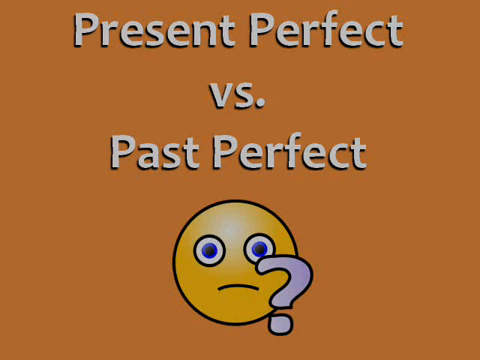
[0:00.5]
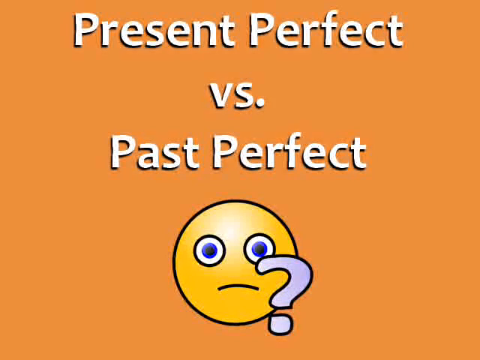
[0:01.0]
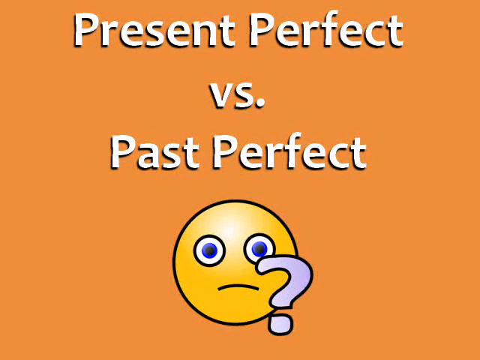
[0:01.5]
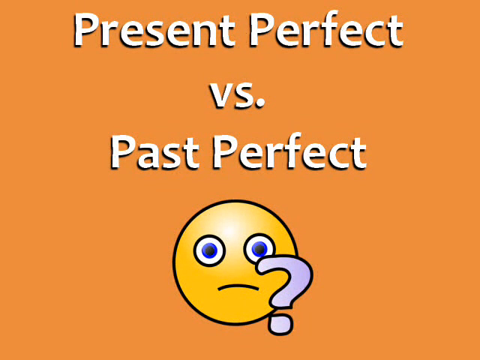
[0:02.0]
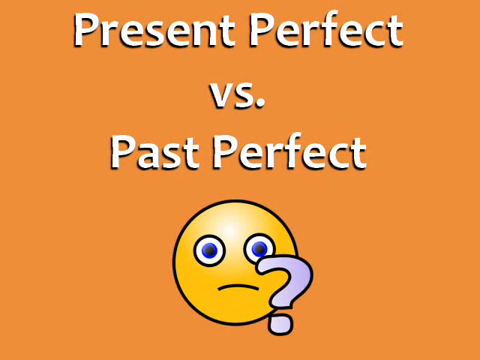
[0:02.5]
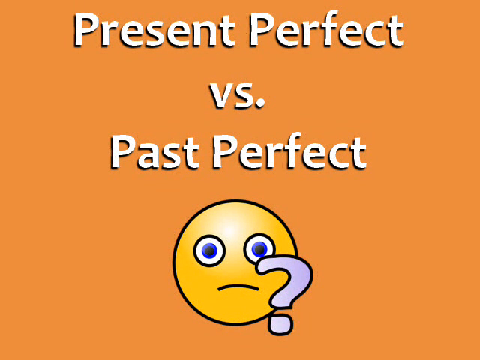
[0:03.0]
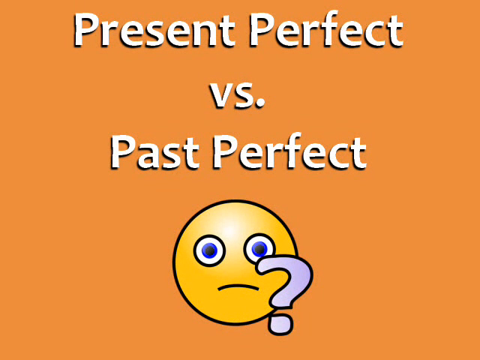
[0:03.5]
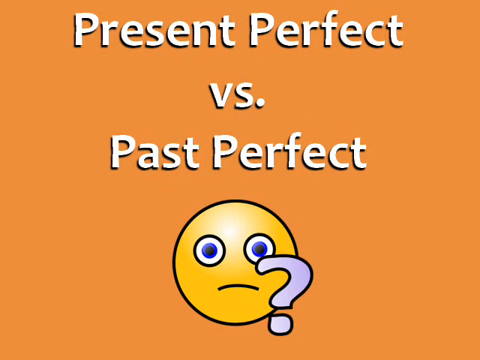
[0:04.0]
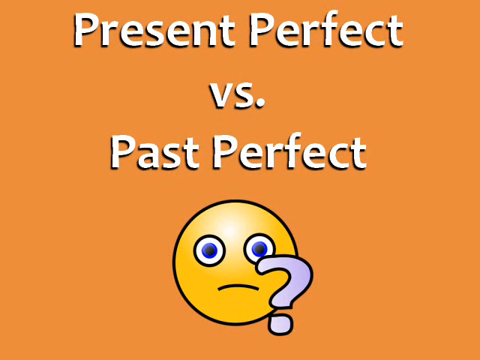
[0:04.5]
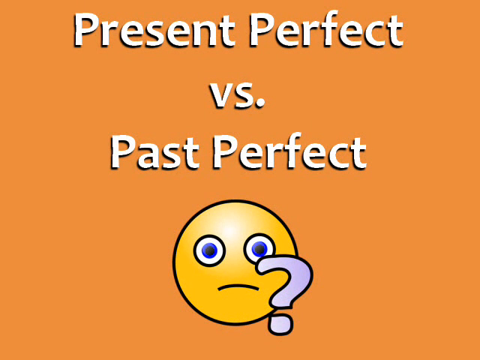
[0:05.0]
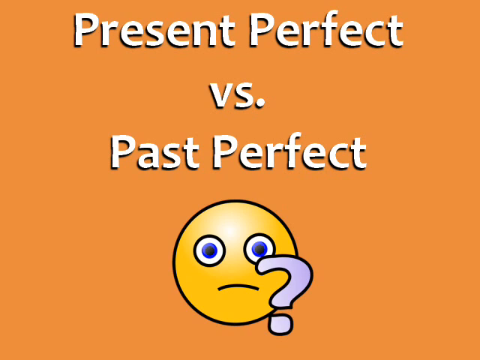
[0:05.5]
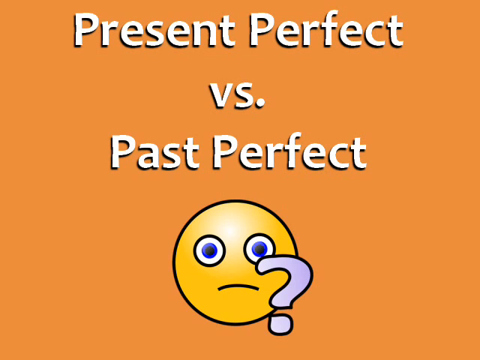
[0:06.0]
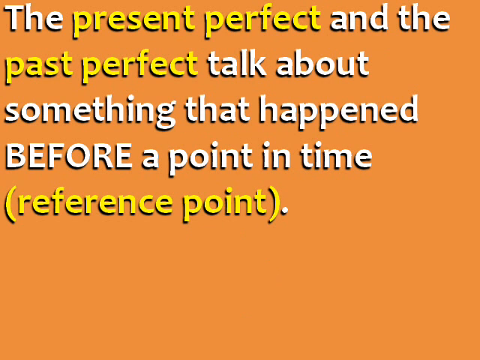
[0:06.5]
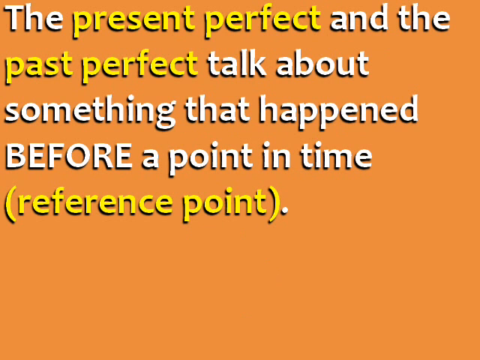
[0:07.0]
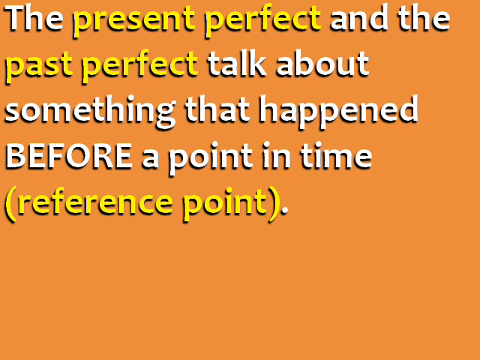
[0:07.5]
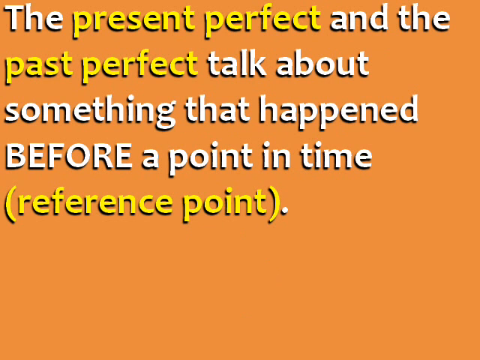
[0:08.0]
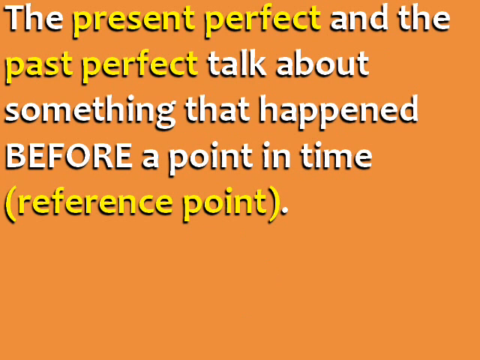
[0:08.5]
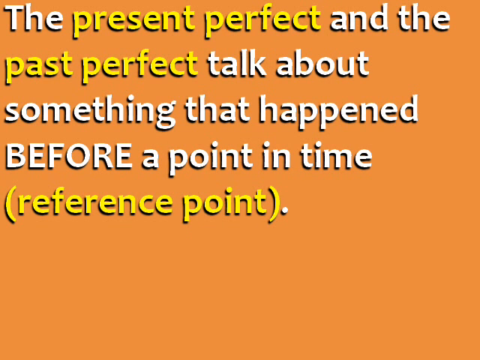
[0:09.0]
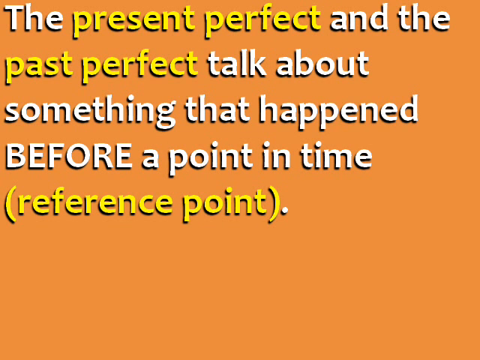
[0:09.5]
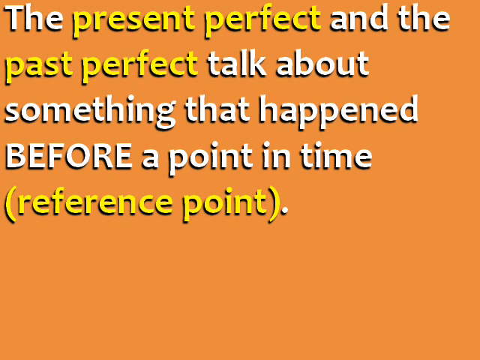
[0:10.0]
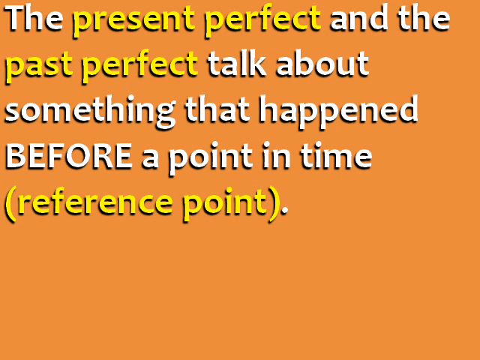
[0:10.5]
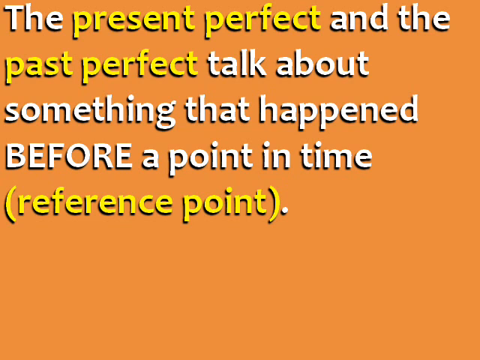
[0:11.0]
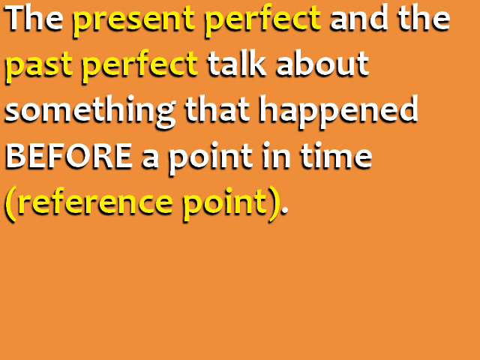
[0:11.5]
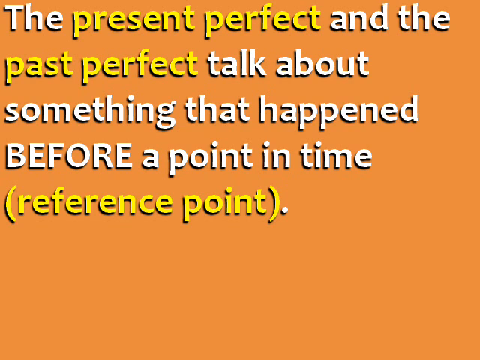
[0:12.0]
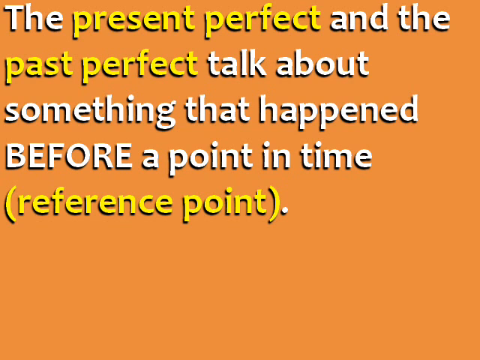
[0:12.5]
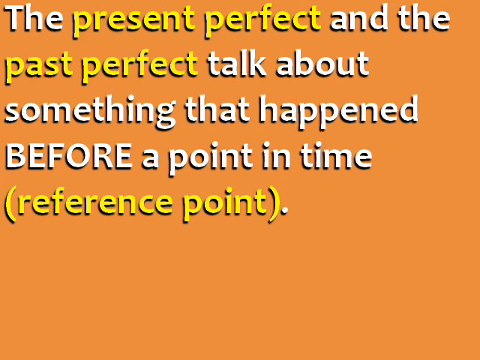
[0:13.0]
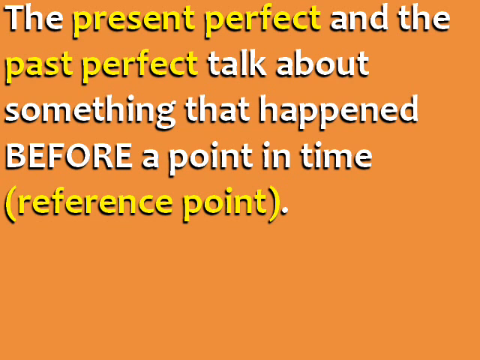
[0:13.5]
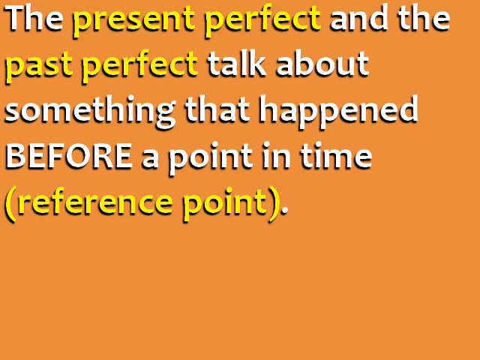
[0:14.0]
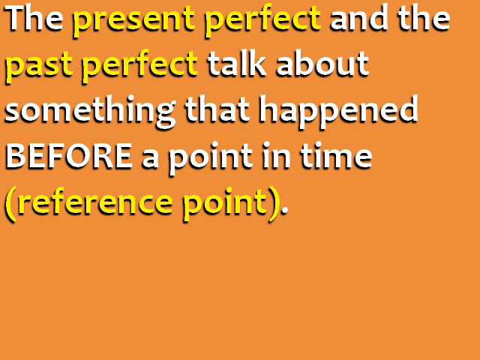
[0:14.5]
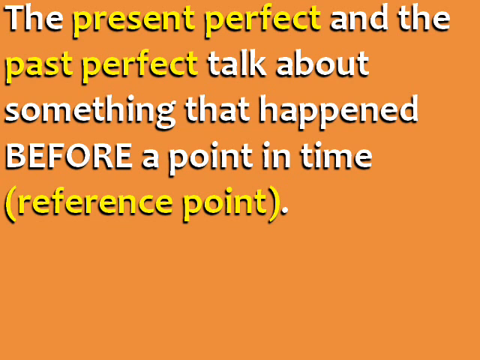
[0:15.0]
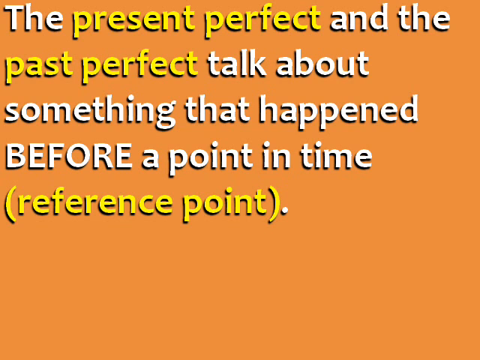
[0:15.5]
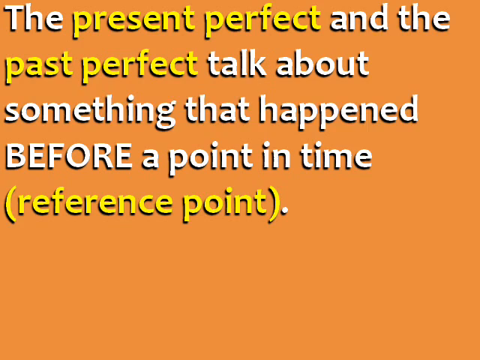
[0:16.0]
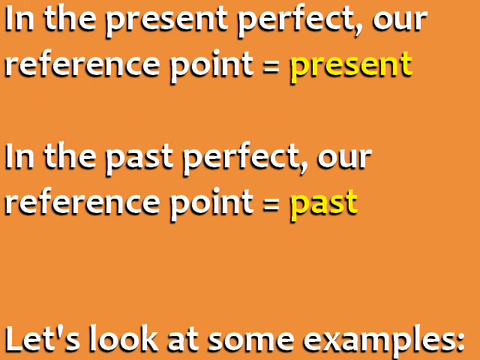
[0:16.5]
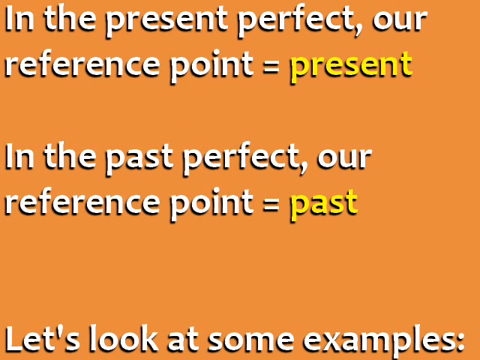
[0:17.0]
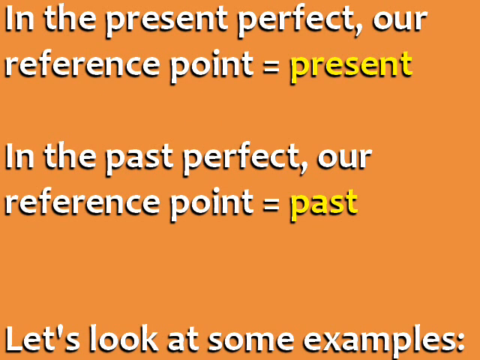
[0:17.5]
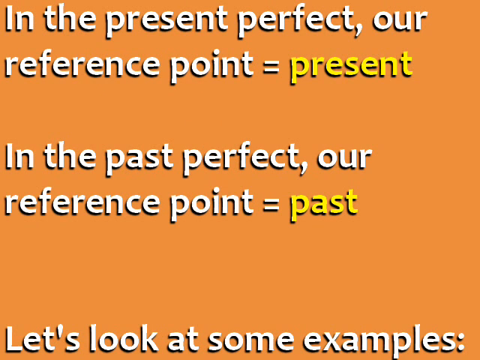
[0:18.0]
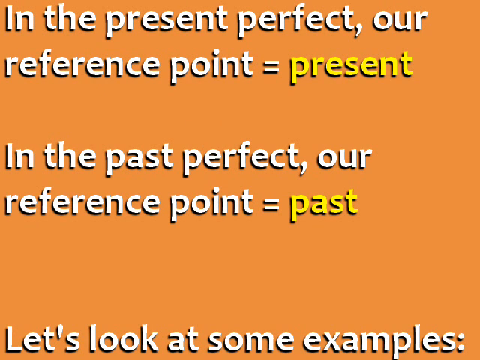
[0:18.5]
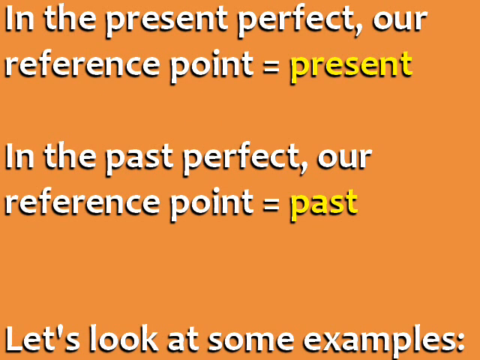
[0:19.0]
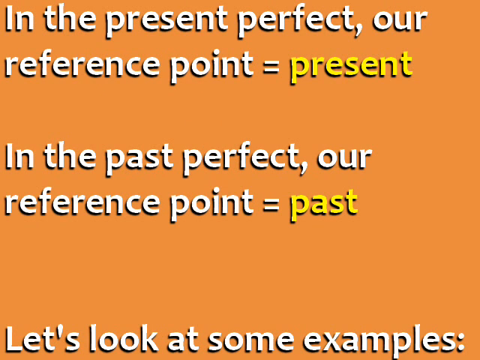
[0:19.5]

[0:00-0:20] The video opens with an emoji of a person and an emoji with a question mark. Then a brown background appears with the words "present perfect versus past perfect." The video goes on to display the meaning of the two tenses: both the present perfect and the past perfect are about something that happened before a point in time, with a point shown in brackets. It then shows the difference between the two tenses, with text that says "in the present perfect our reference point is equal to present" and "in the past perfect our reference point is equal to past."